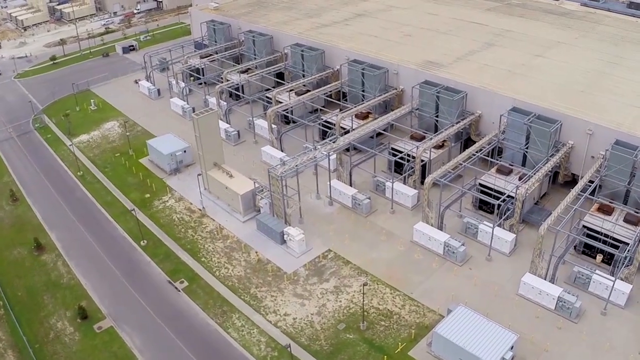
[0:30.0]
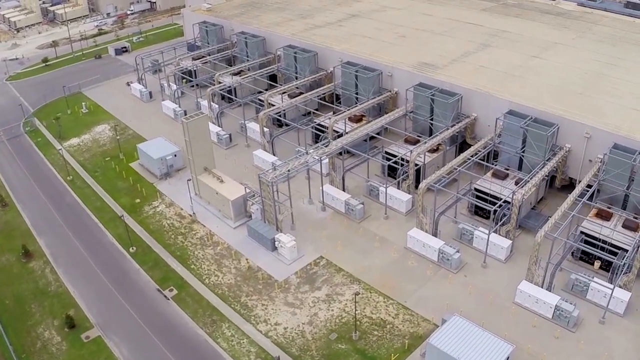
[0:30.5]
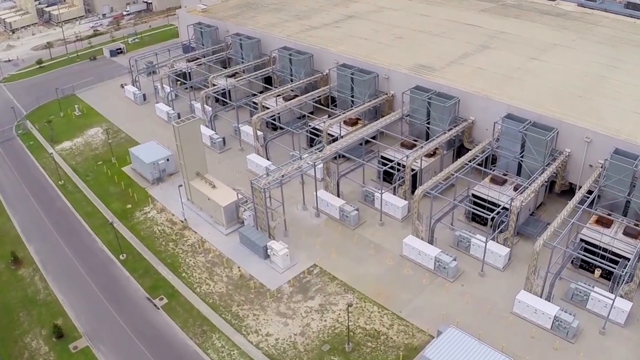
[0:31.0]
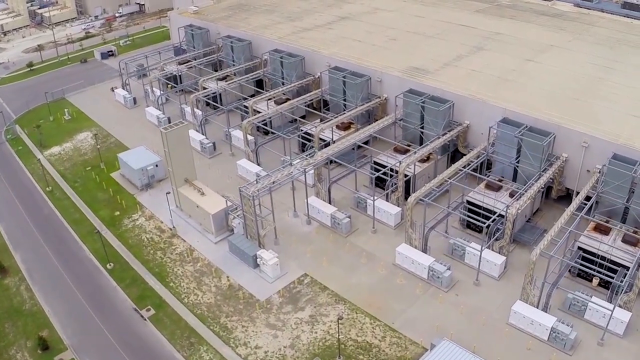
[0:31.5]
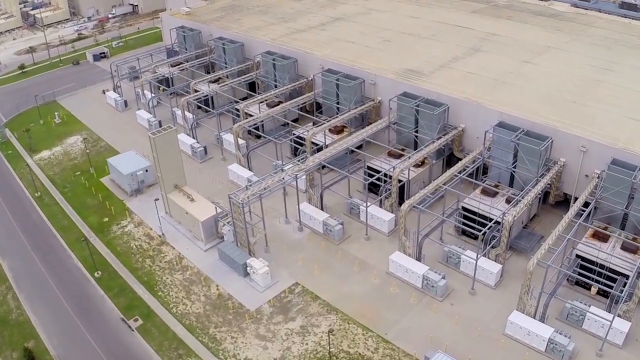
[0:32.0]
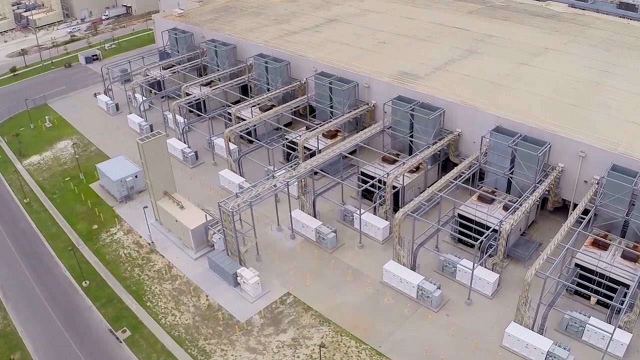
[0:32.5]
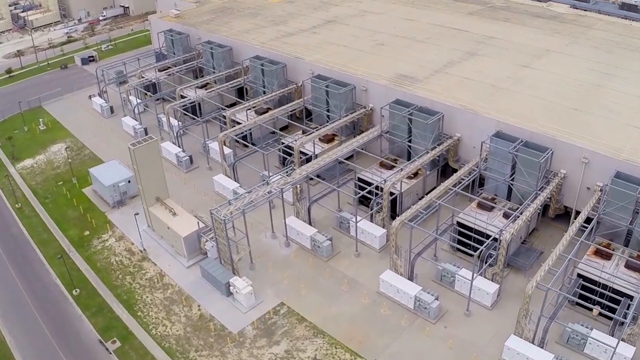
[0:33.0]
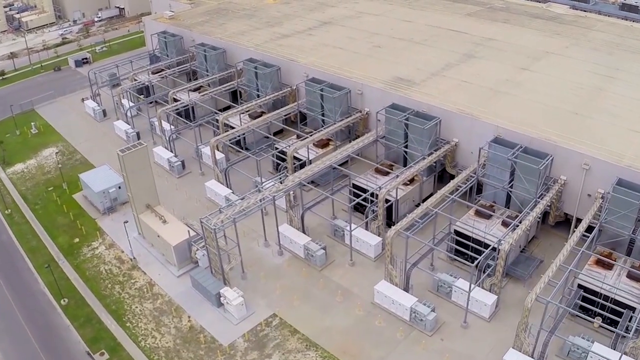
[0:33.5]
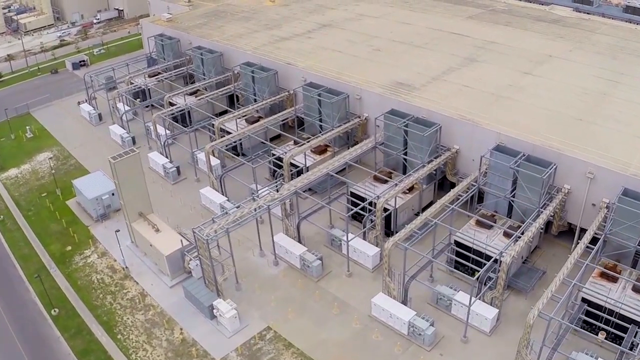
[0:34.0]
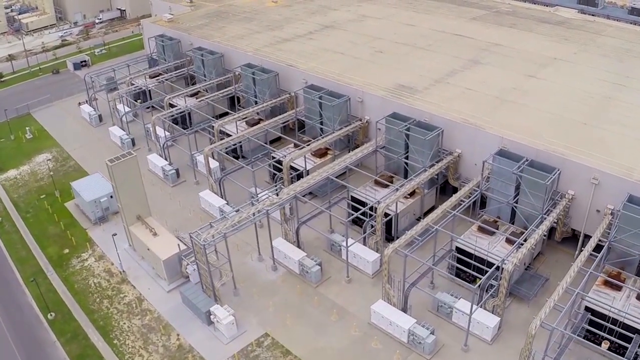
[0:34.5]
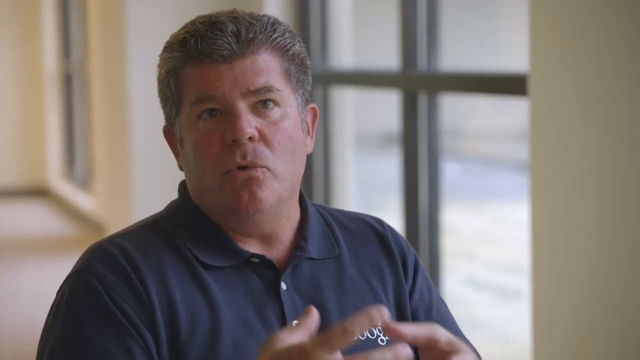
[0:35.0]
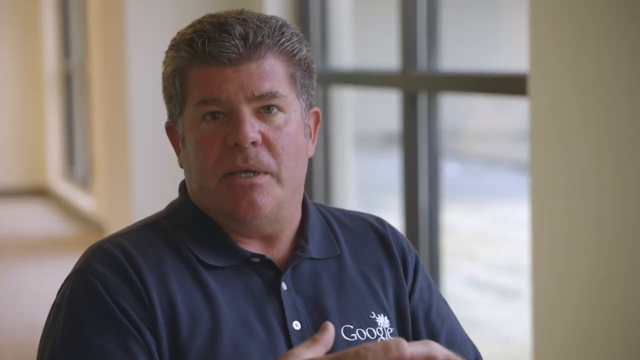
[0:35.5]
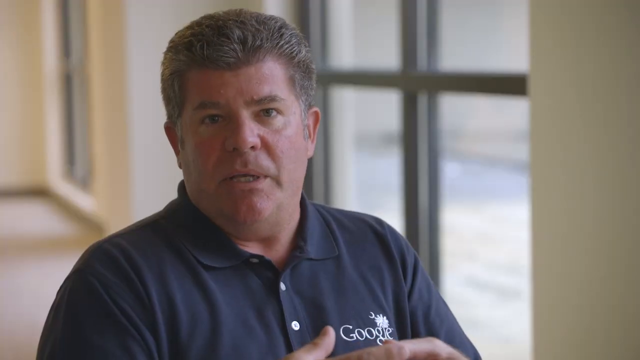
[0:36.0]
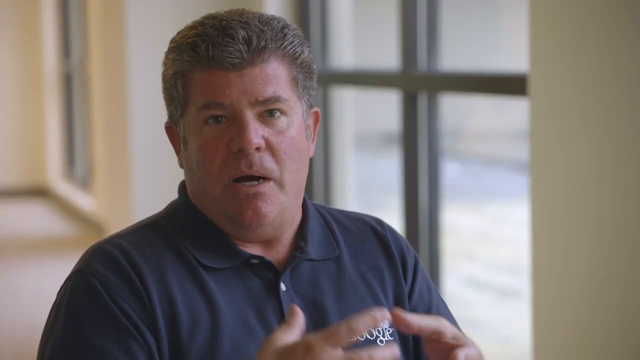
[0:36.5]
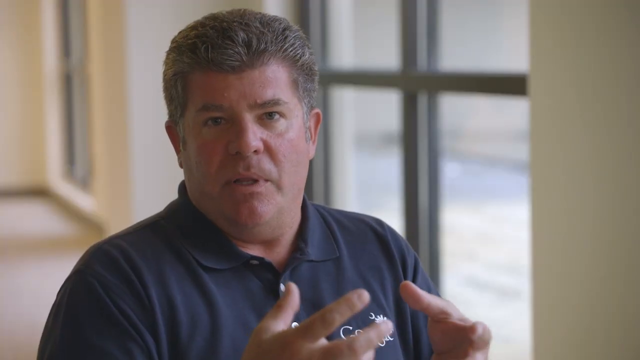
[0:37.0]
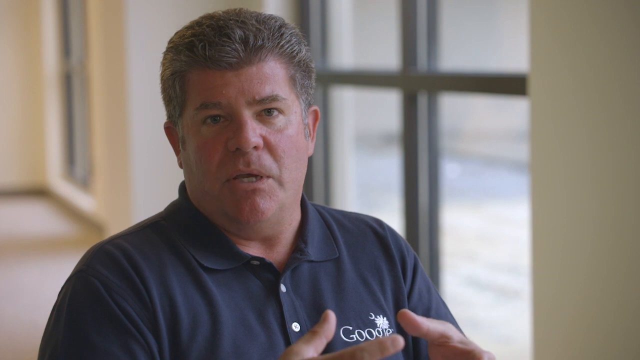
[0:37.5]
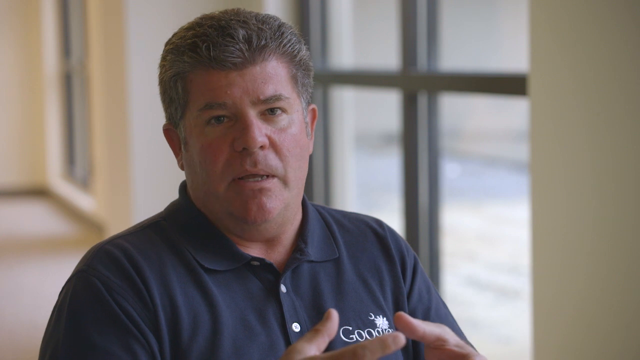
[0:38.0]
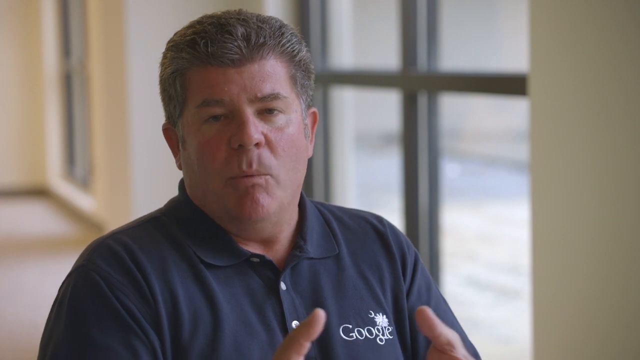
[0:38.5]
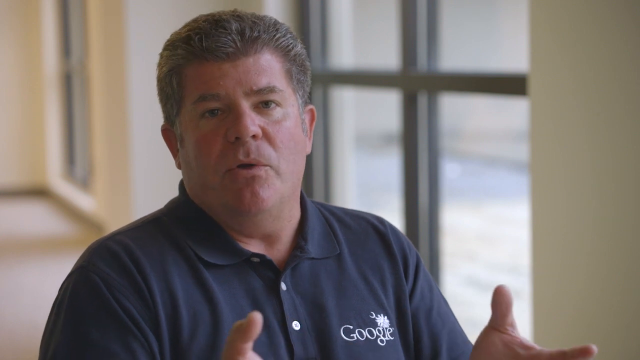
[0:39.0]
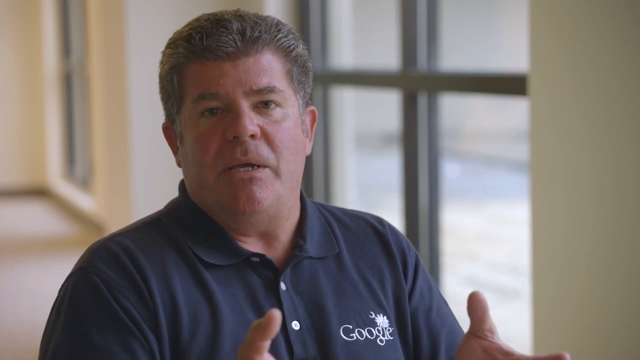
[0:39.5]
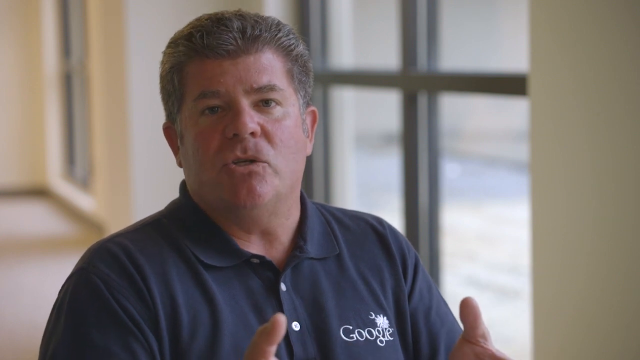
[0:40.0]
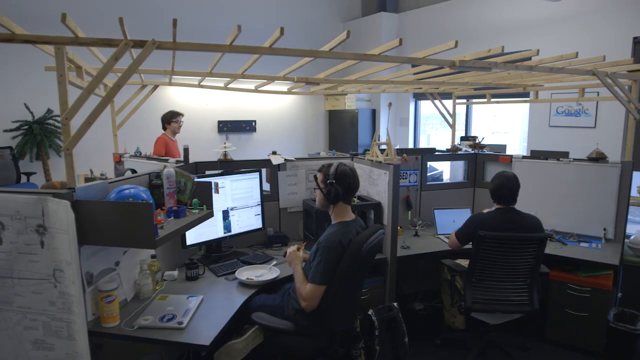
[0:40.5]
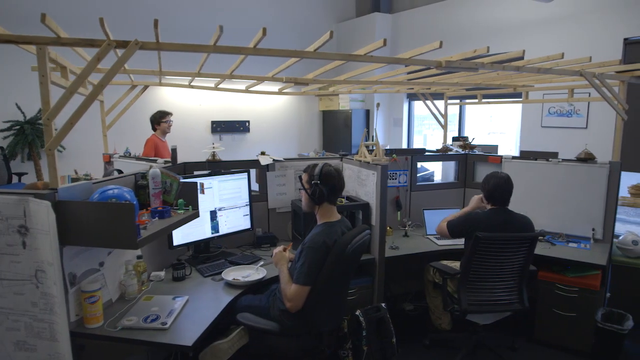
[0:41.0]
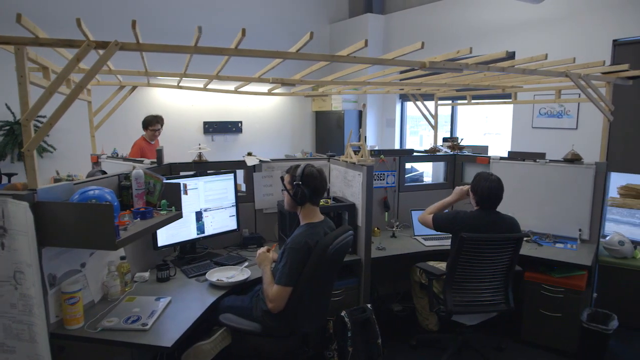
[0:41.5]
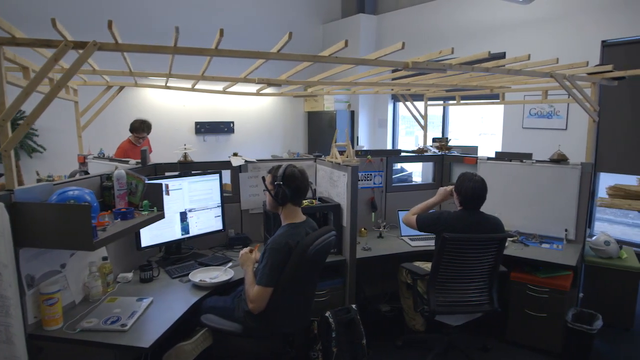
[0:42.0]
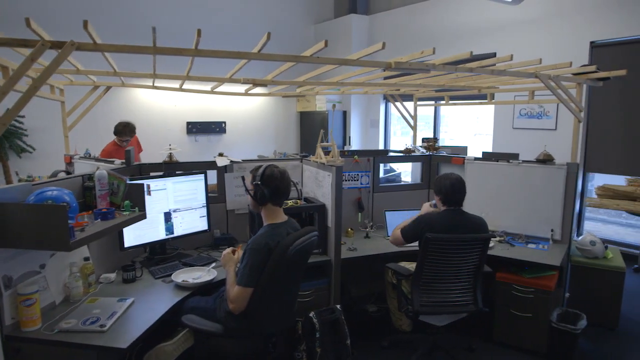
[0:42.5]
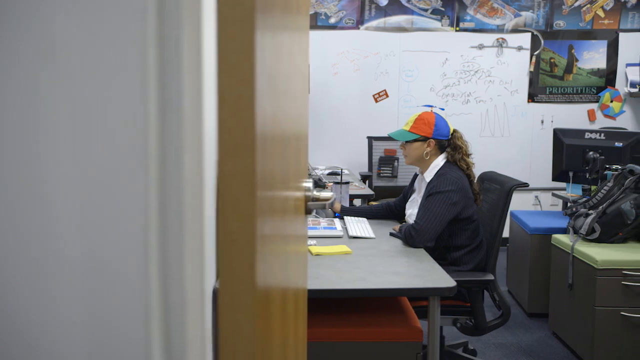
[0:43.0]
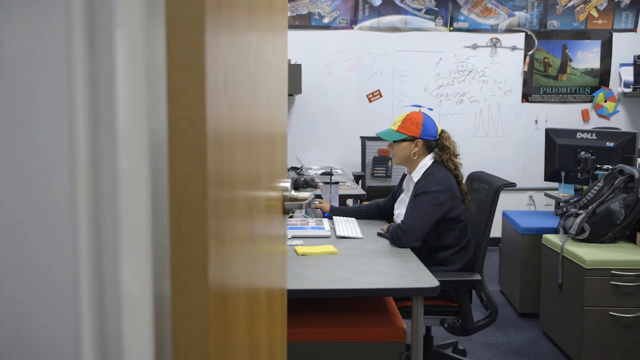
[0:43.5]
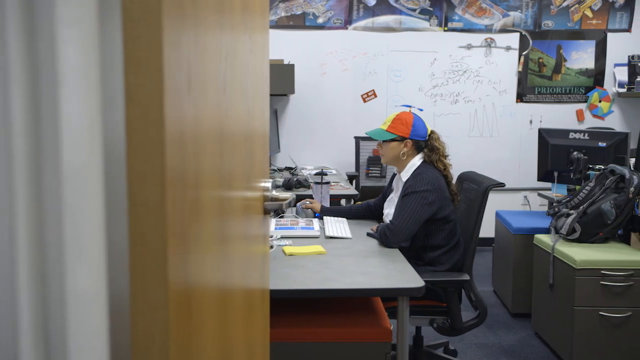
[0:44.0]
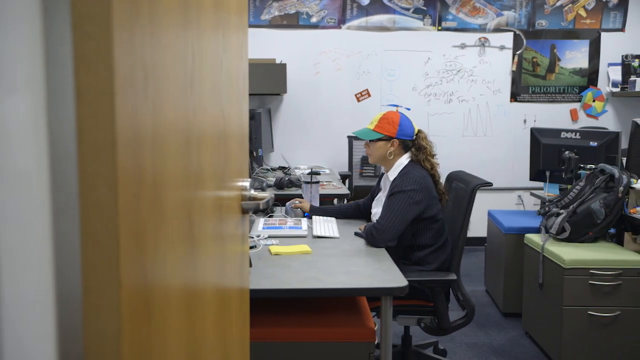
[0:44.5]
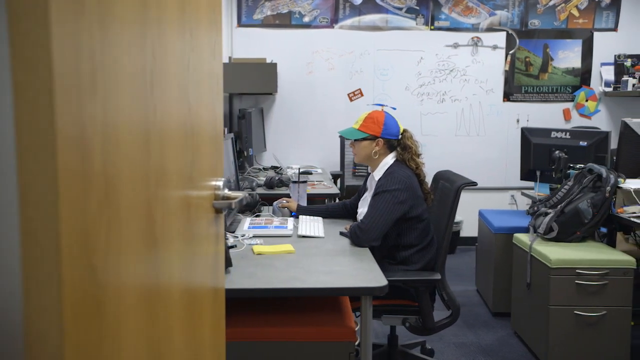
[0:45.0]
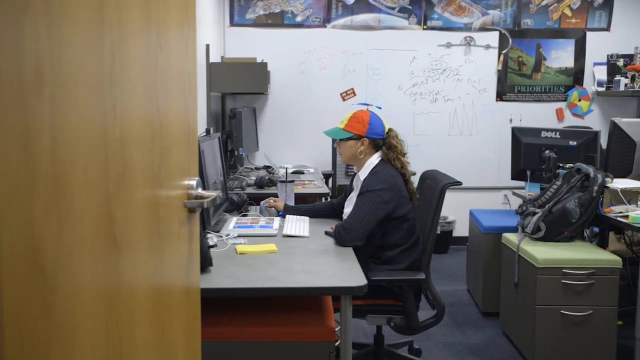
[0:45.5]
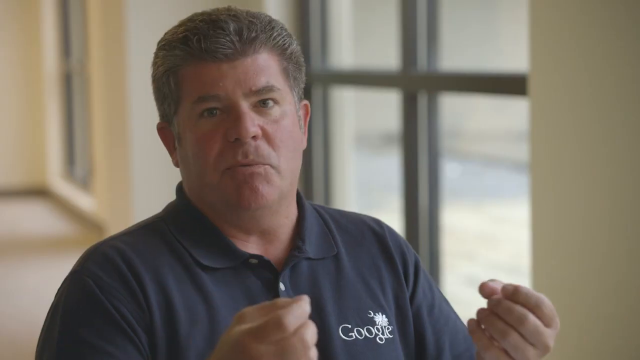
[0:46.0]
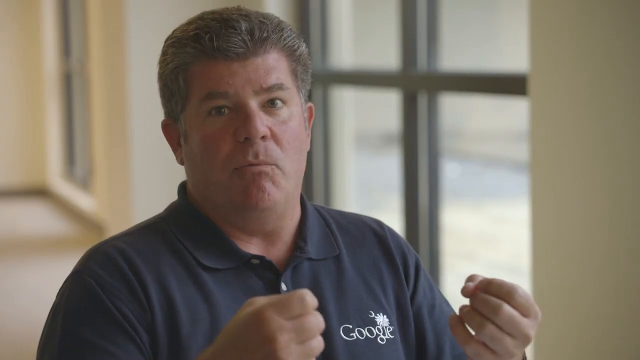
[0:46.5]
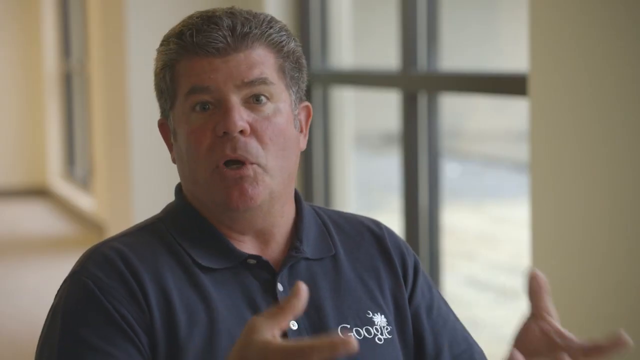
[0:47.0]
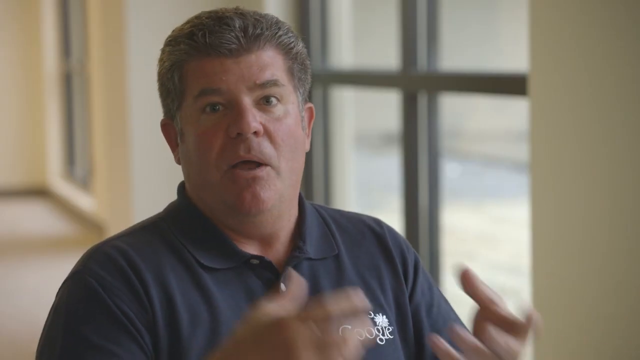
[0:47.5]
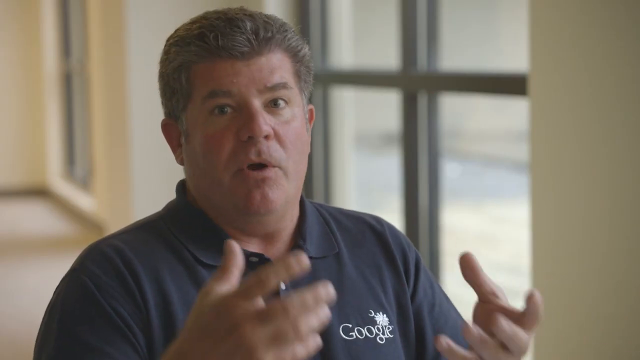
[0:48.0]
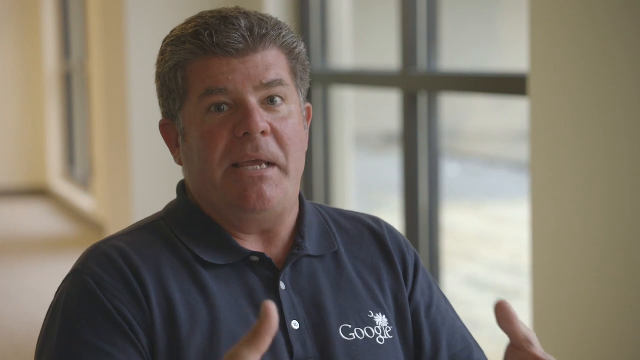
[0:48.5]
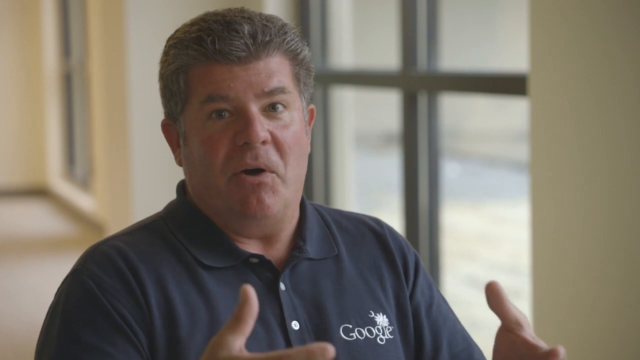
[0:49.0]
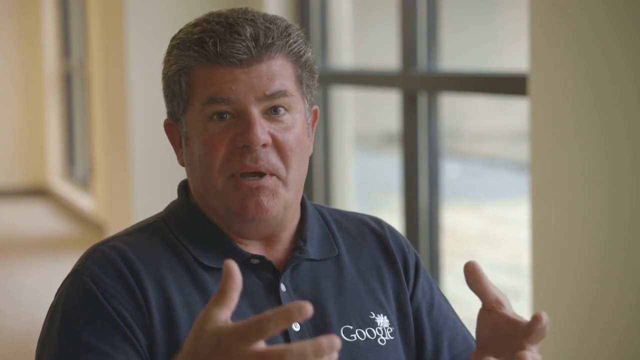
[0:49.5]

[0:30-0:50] The same man still wears his Google shirt. The same concrete building with metal parts coming out of its side appears, apparently part of the data center. Employees work while the man talks; most of them look professional, working at their computers. The setting is somewhat dark. Some of them wear headphones, and they are all working. A woman wears a colorful, silly hat.